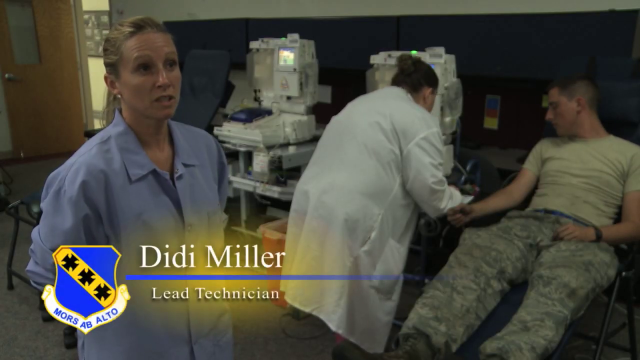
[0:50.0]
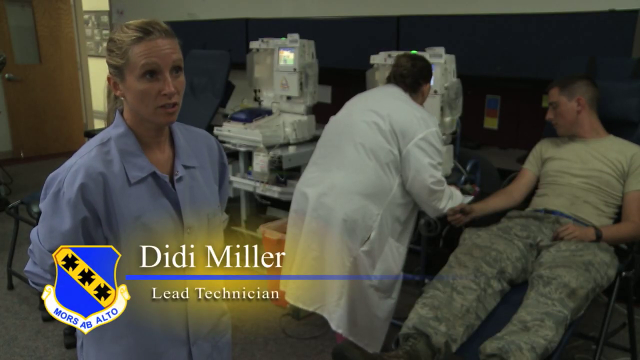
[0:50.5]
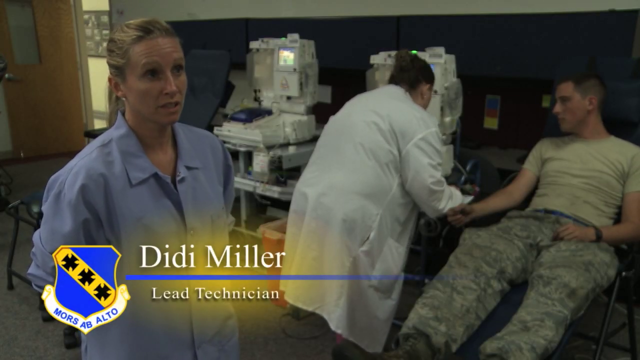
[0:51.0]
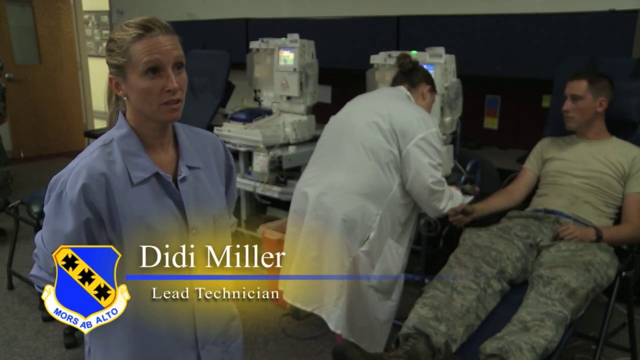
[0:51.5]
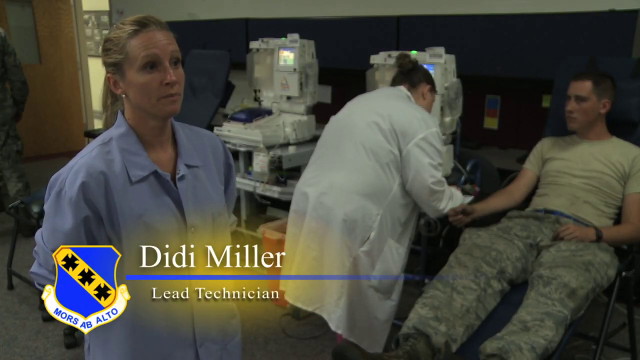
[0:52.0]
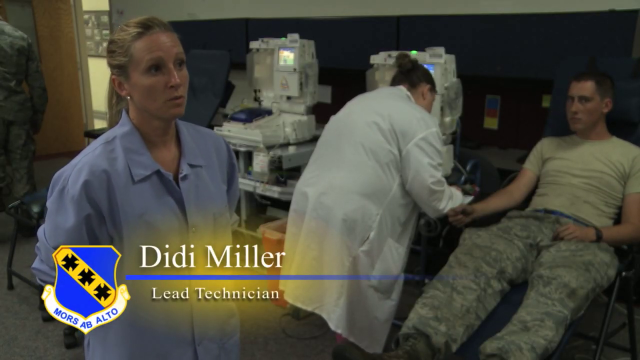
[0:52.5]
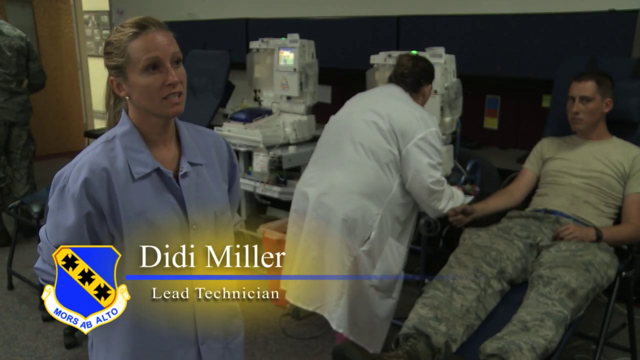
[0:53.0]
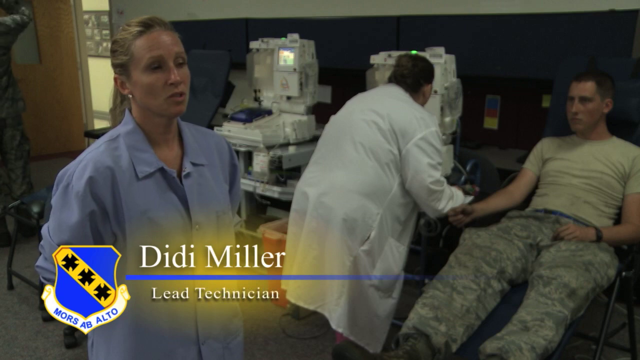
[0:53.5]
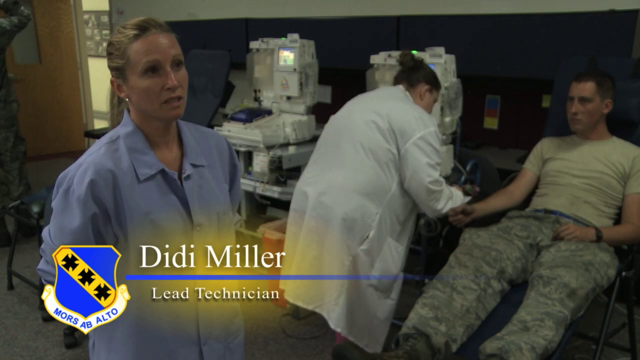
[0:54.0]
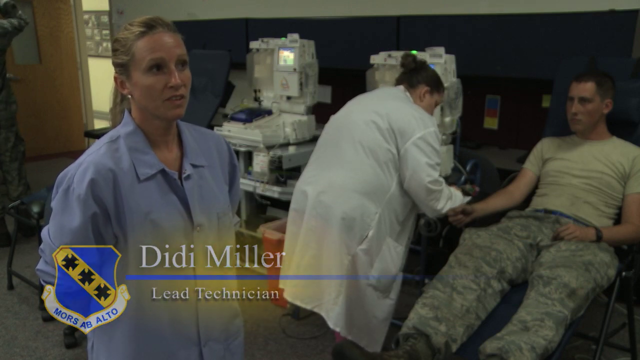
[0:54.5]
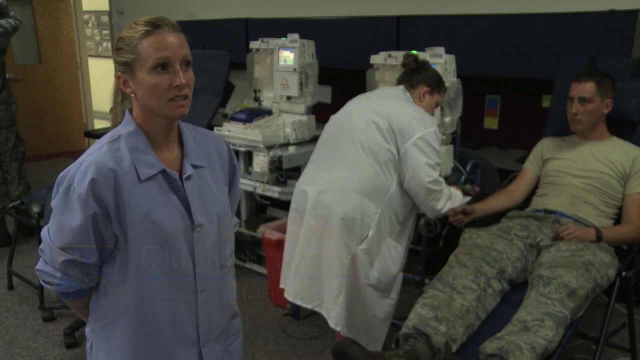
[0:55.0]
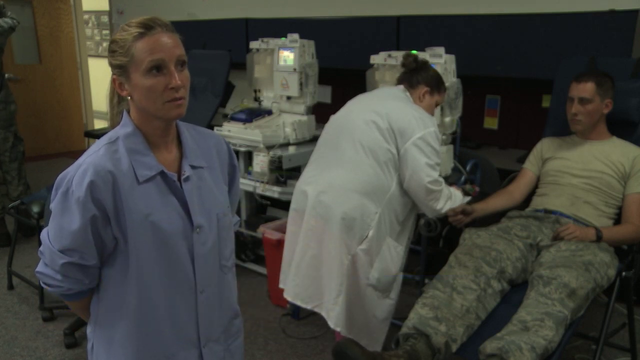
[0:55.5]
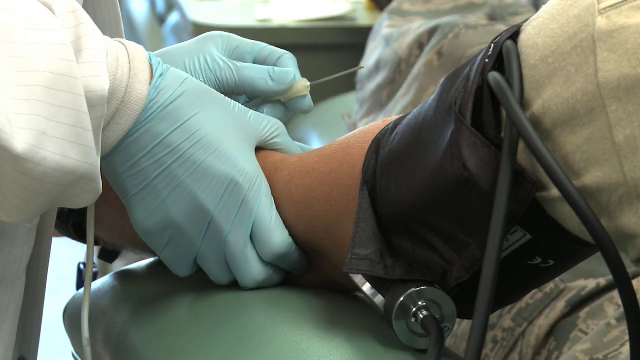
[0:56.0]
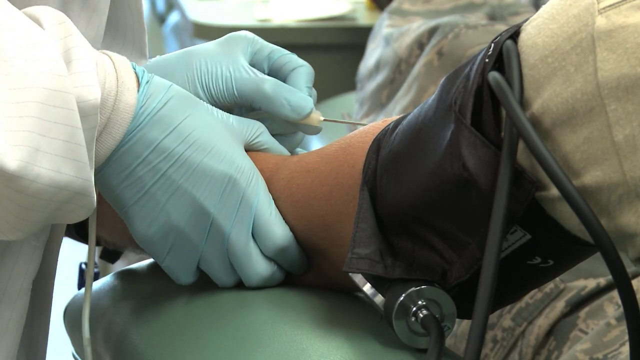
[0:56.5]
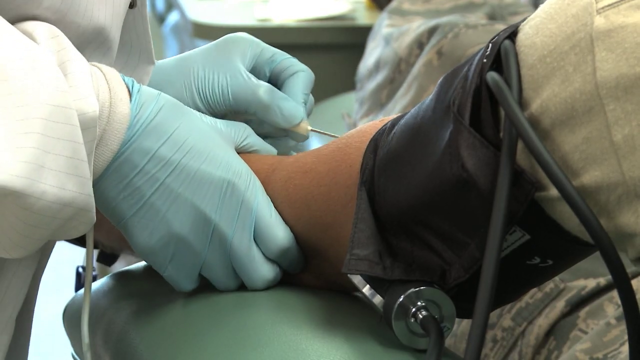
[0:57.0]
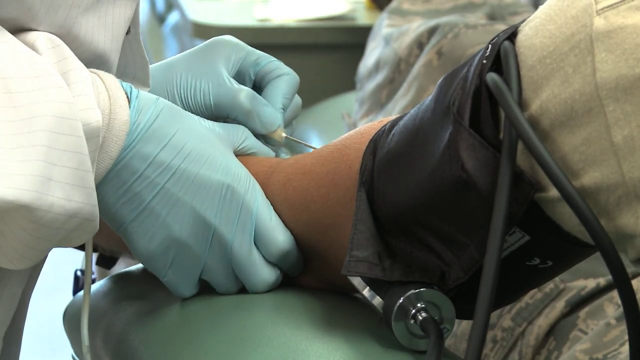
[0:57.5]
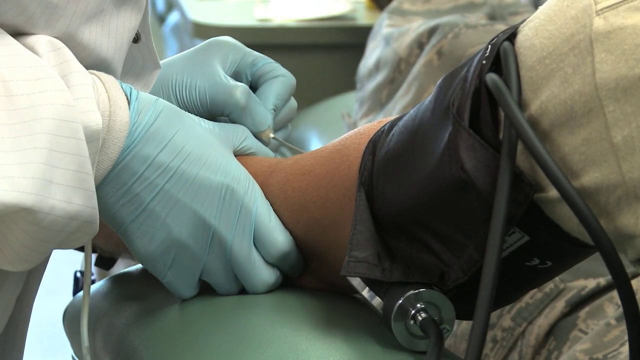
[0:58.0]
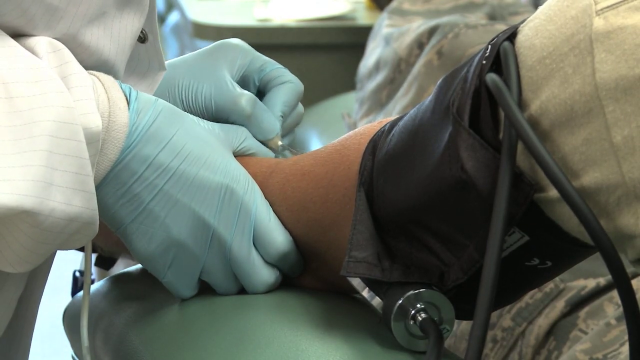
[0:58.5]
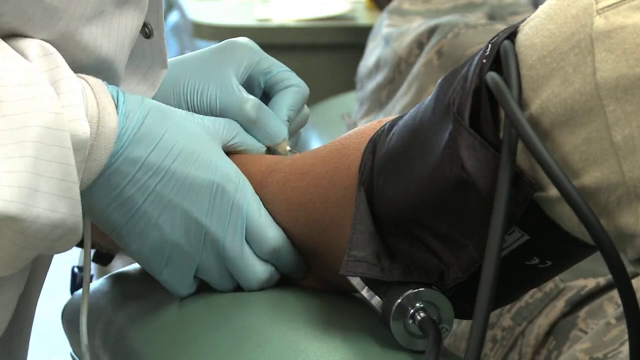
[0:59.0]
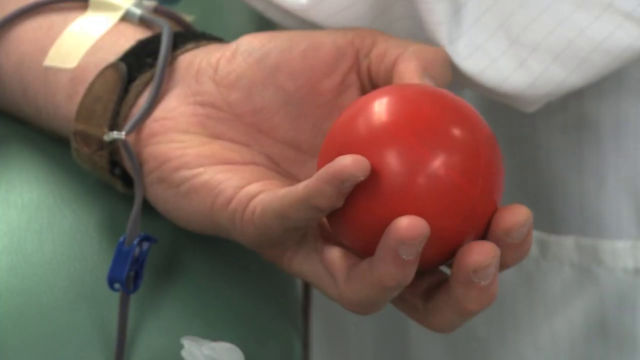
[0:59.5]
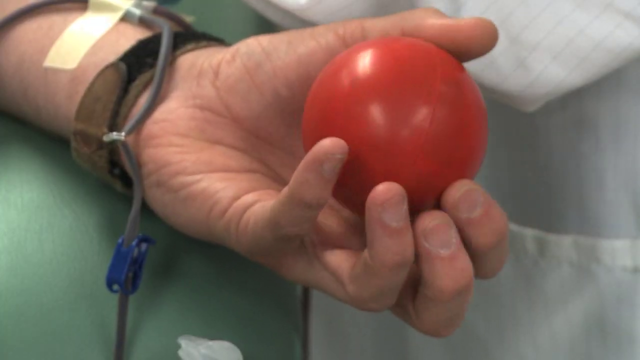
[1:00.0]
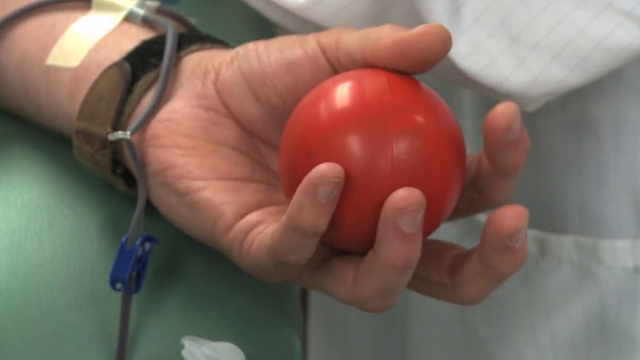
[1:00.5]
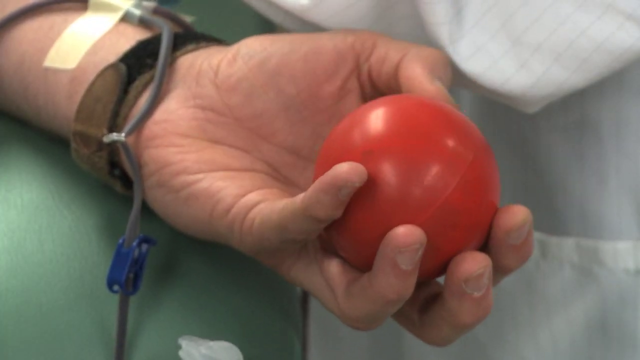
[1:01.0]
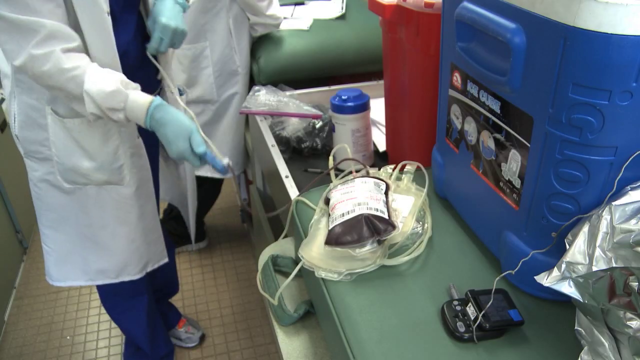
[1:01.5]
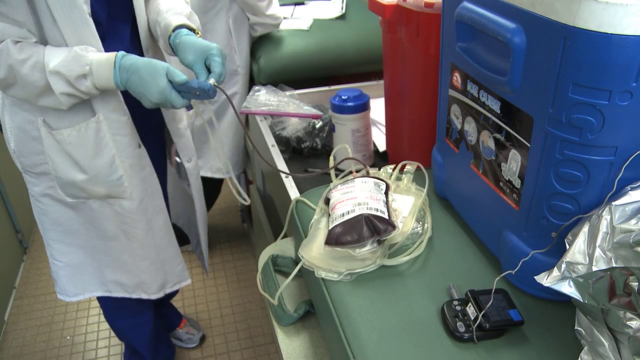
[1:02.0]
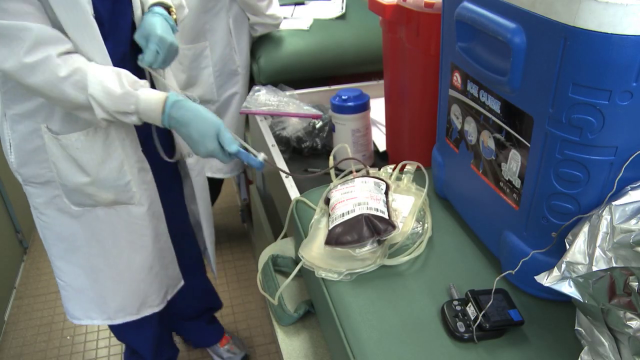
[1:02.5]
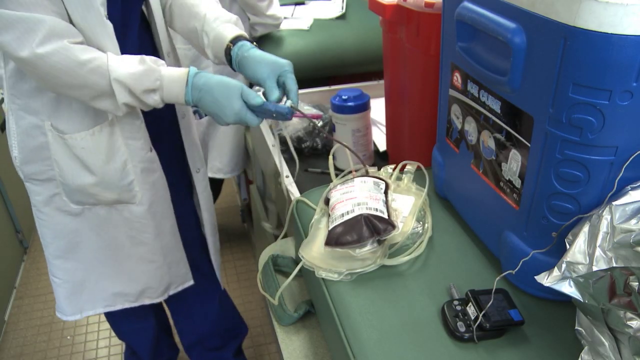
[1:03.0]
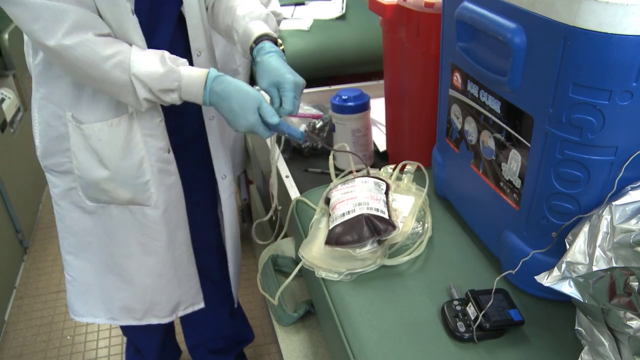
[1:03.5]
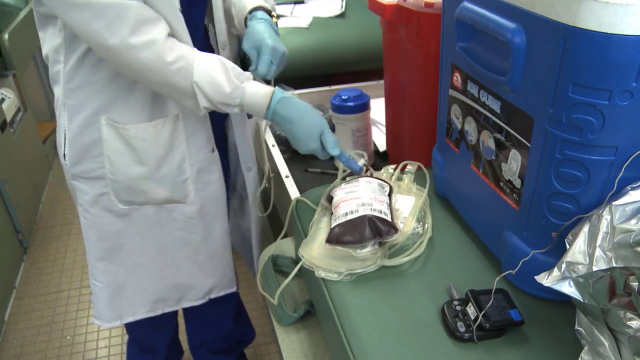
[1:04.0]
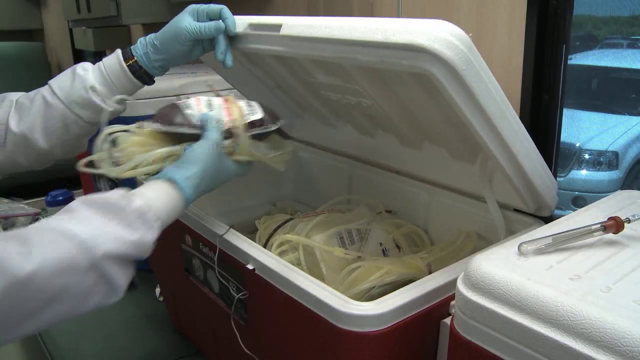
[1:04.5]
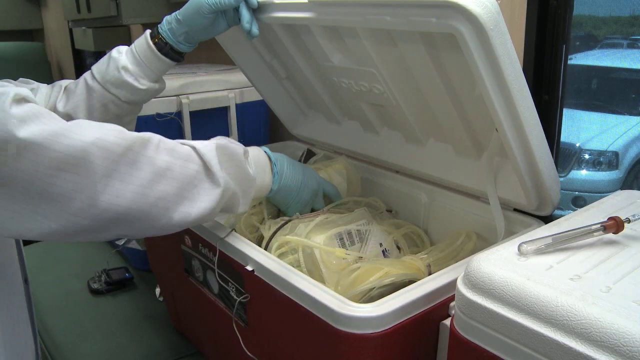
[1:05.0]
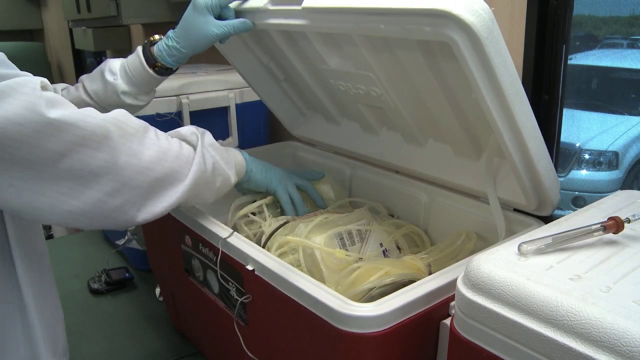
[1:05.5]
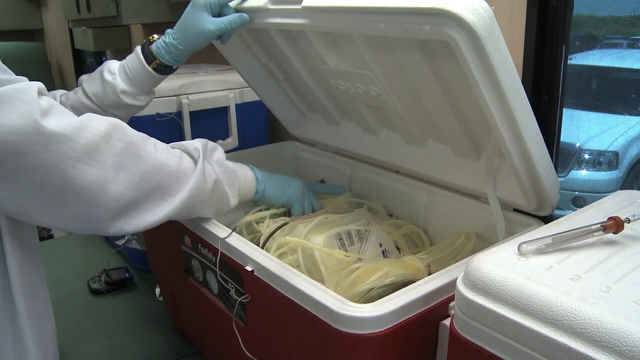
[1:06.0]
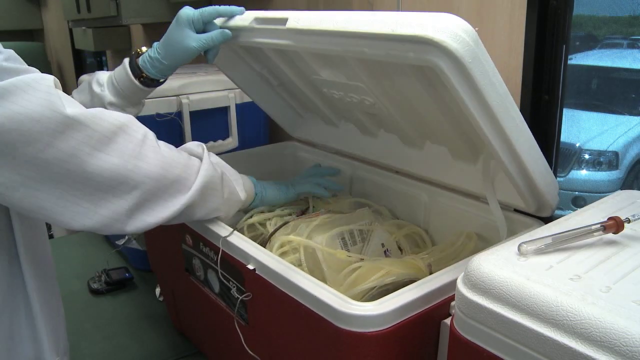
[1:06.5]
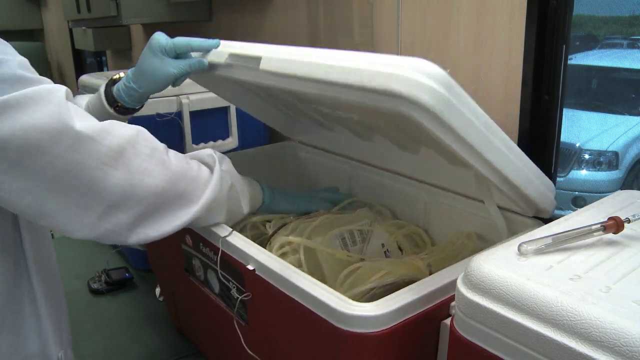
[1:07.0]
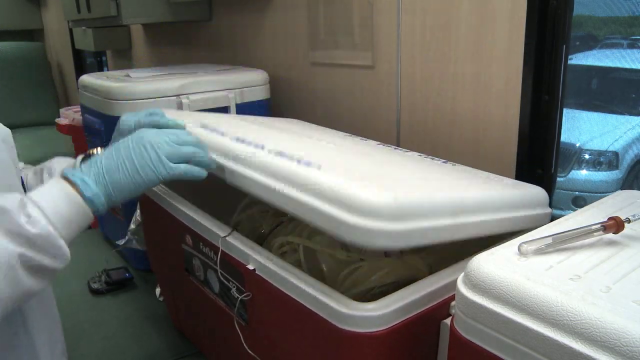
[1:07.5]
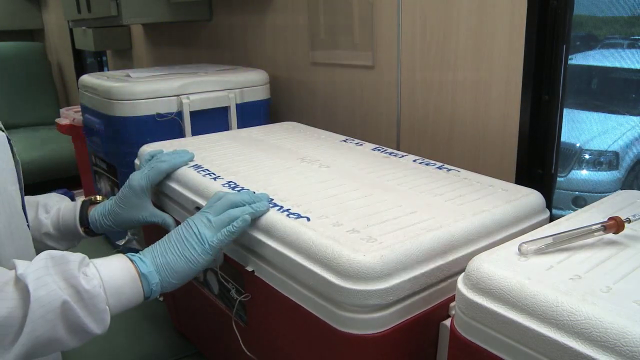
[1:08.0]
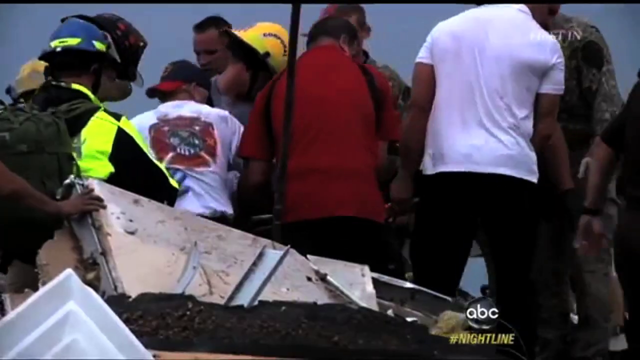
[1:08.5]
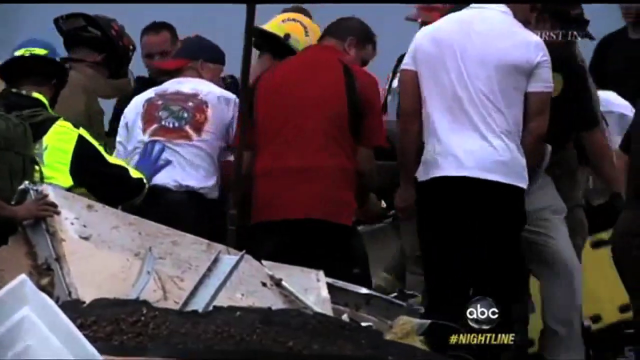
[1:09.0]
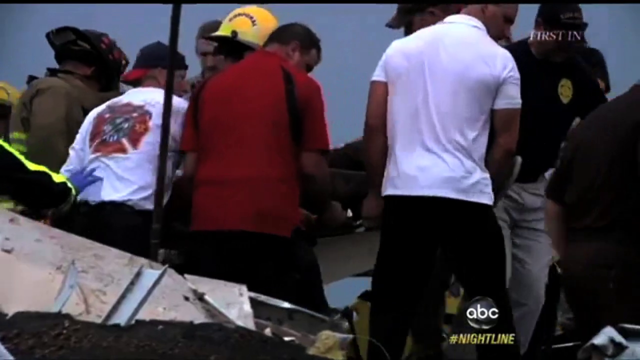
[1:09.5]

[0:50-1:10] The lead technician, Didi Miller, appears wearing an oversized light blue shirt and pearl earrings, with blonde hair. Behind her is a nurse in a white lab coat, and a soldier, recognisable by his army pants, wearing a light gray top, is donating blood from his left arm while lying down on a stretcher chair, about to donate. A nurse wearing blue gloves and a white lab coat then pokes a needle into the right arm of another soldier. A blood pressure tester is worn, and the individual holds a red stress ball, turning it around, using their right hand to donate. The donated blood is shown in a dark red colour and is put into a red cooler box with a white lid.